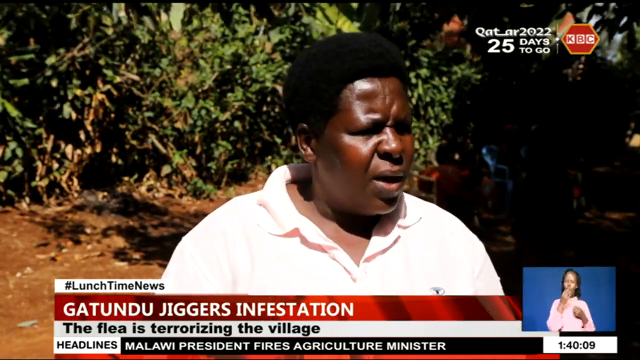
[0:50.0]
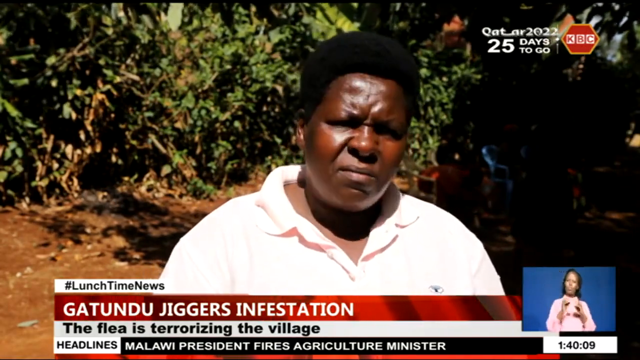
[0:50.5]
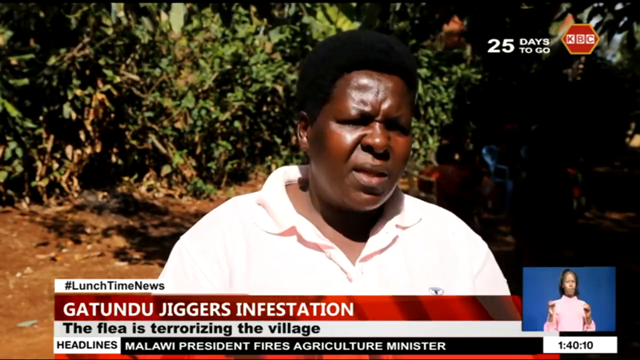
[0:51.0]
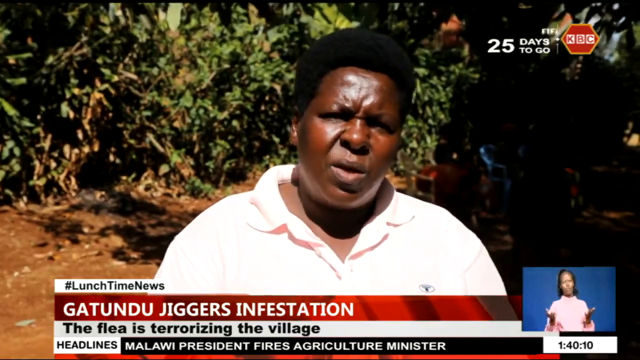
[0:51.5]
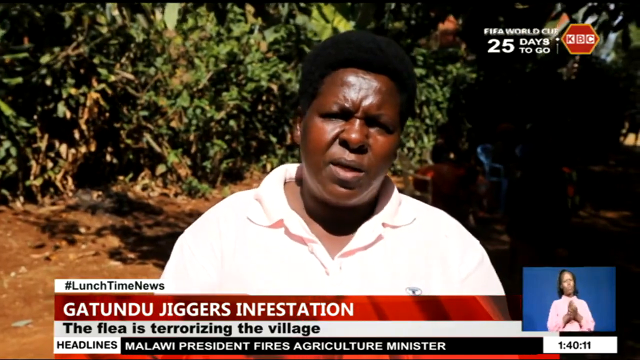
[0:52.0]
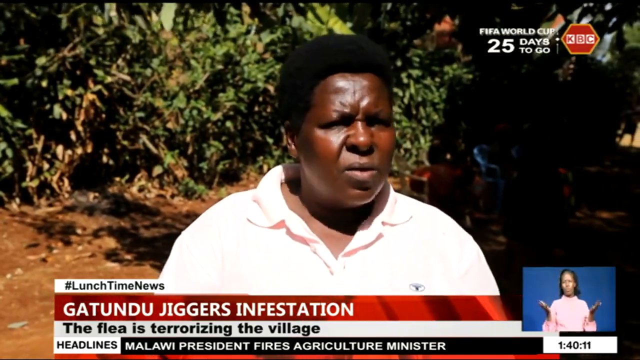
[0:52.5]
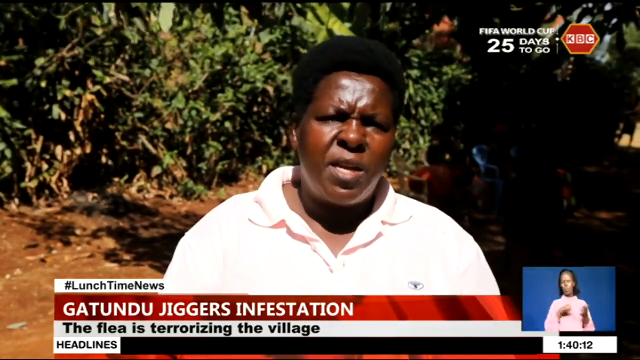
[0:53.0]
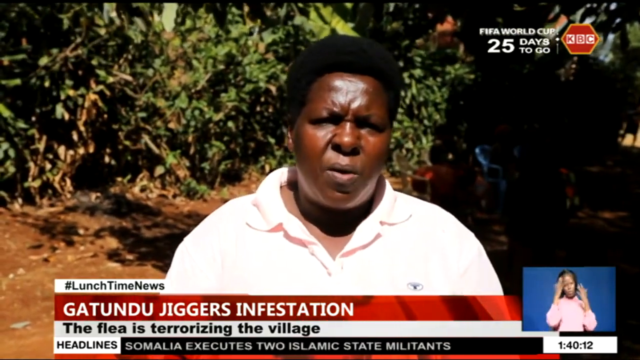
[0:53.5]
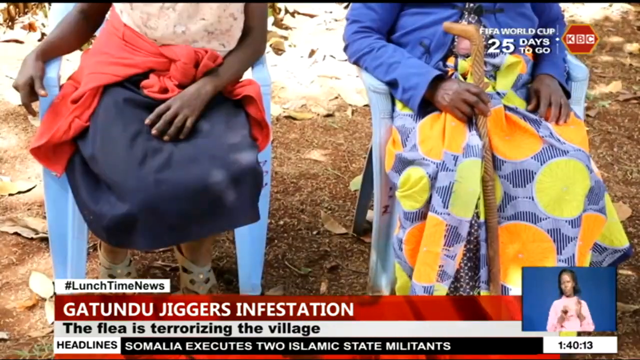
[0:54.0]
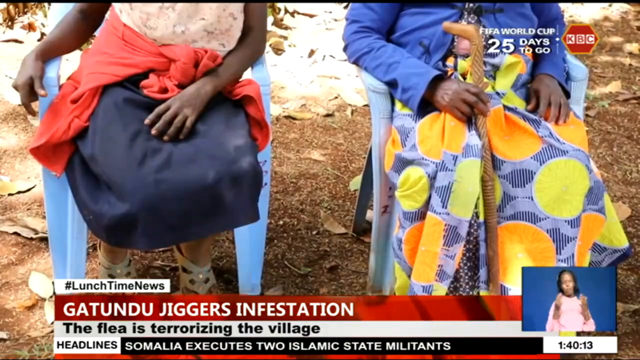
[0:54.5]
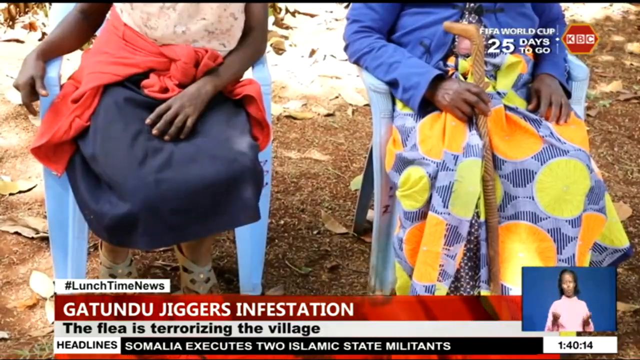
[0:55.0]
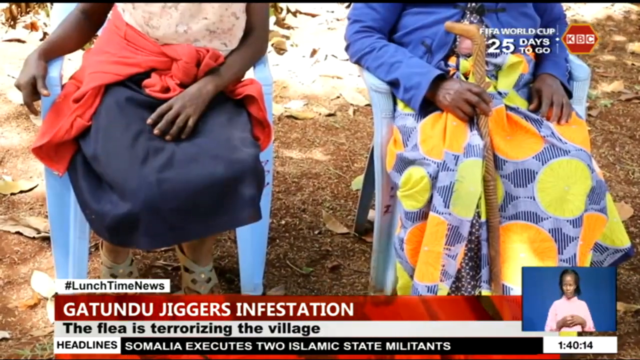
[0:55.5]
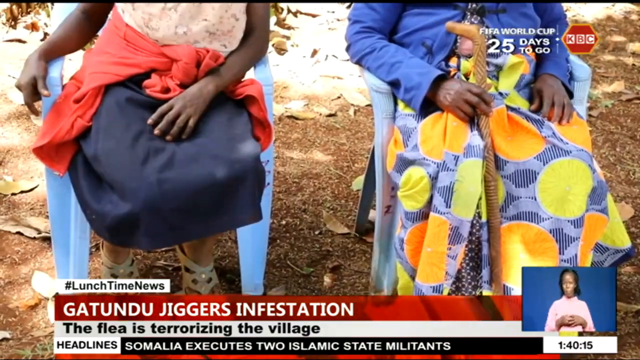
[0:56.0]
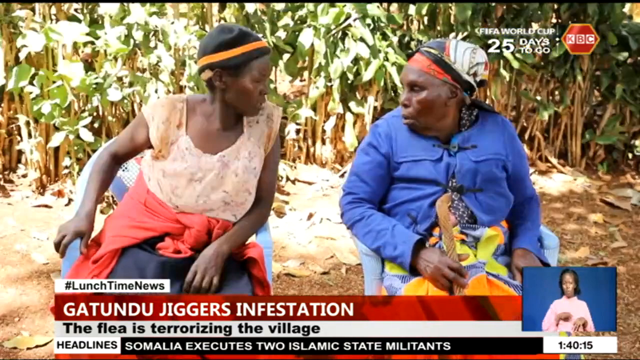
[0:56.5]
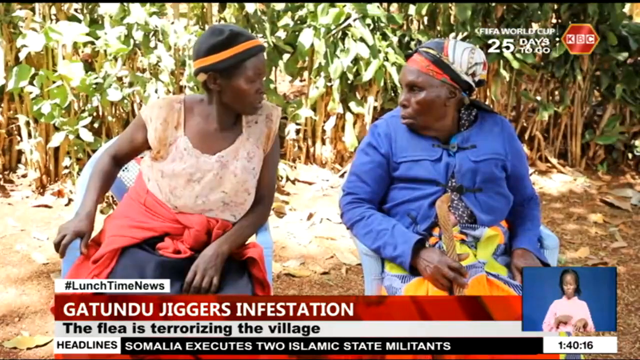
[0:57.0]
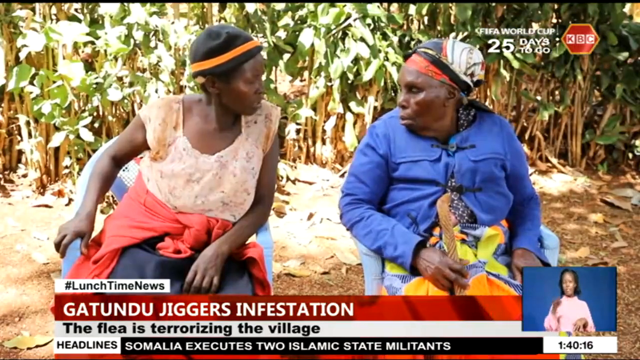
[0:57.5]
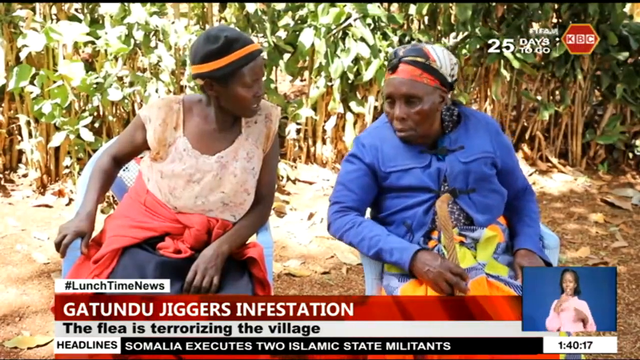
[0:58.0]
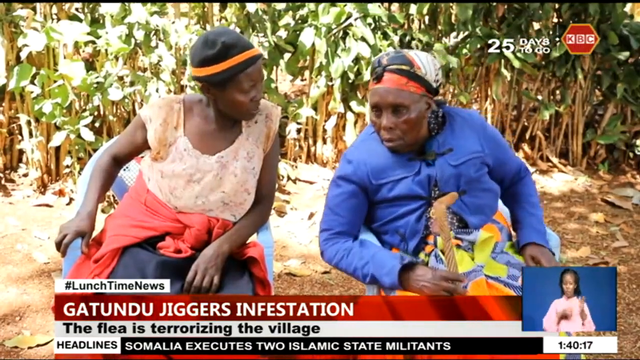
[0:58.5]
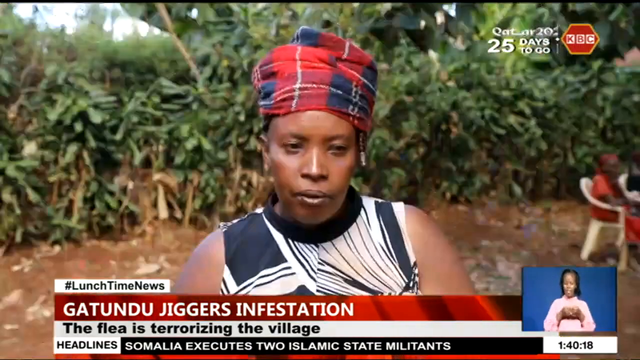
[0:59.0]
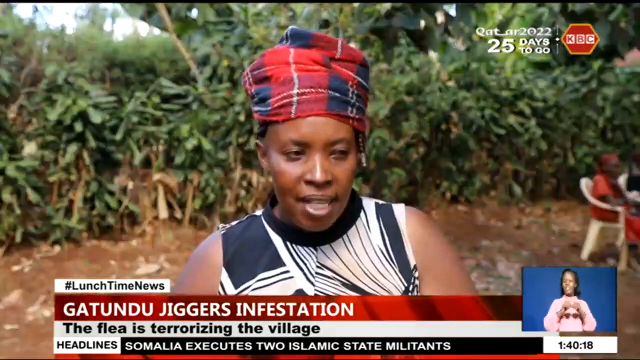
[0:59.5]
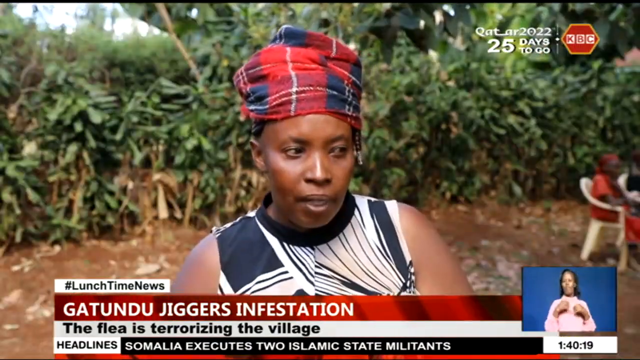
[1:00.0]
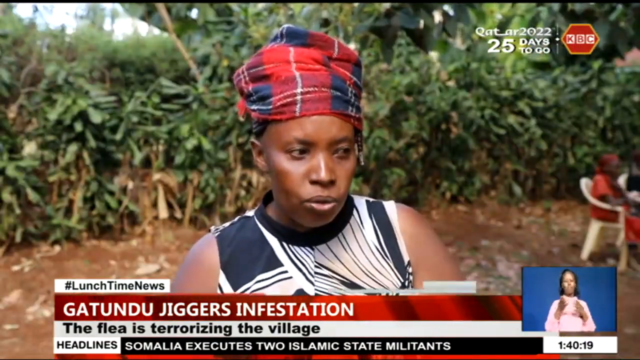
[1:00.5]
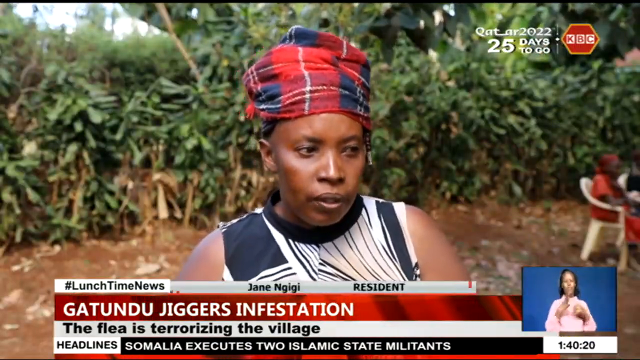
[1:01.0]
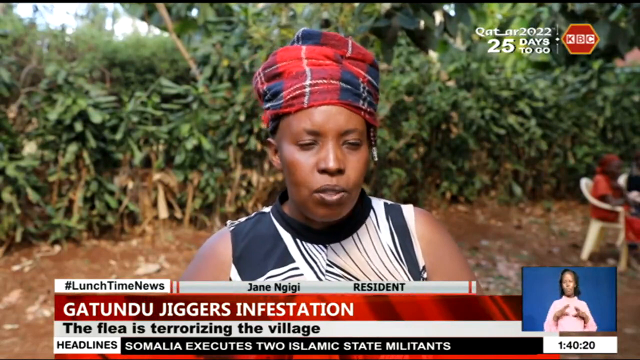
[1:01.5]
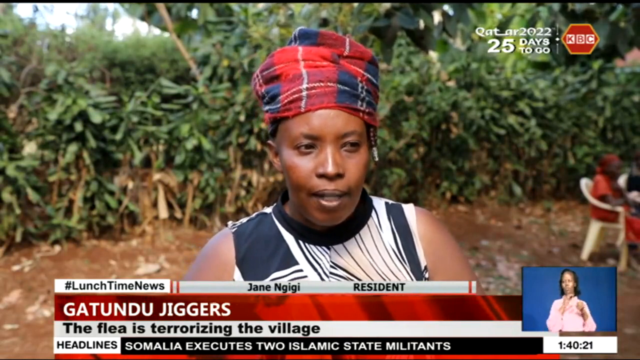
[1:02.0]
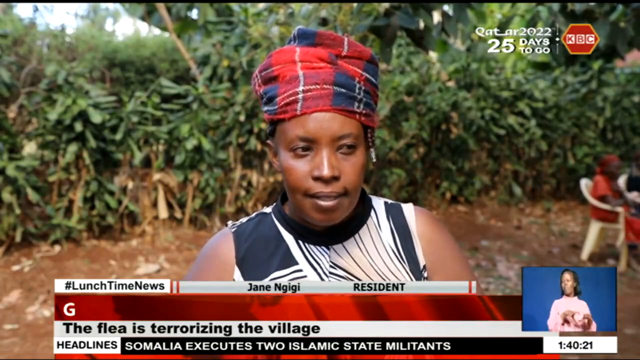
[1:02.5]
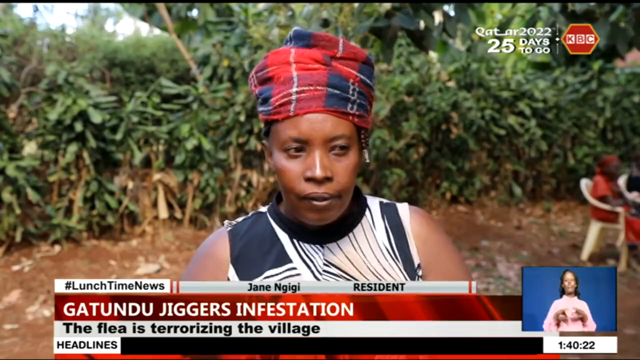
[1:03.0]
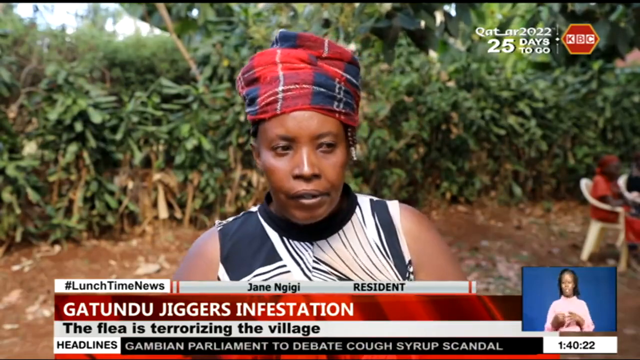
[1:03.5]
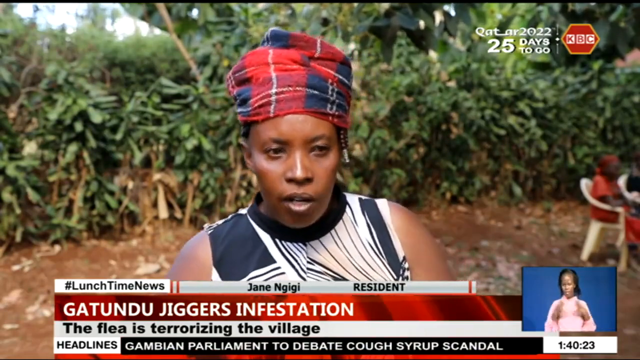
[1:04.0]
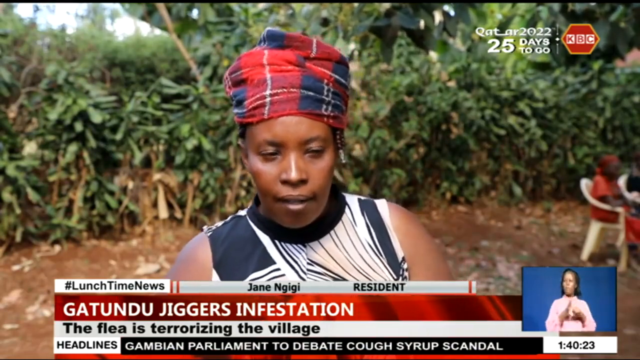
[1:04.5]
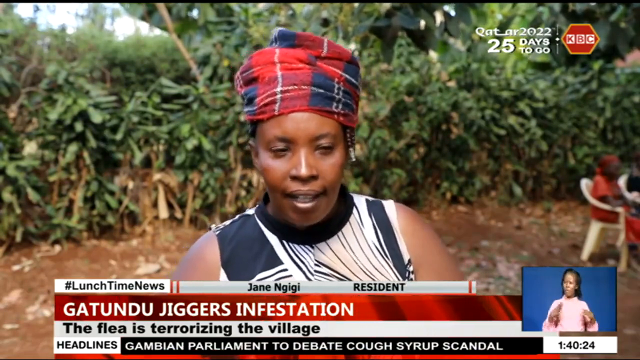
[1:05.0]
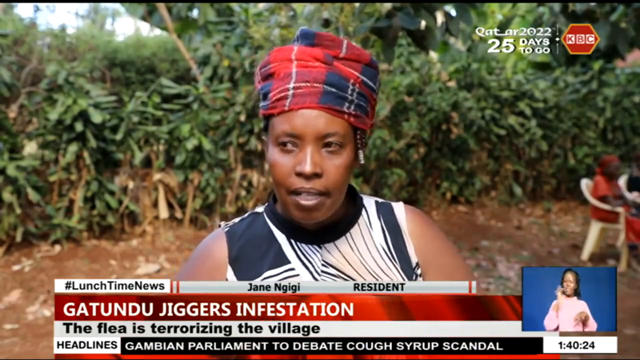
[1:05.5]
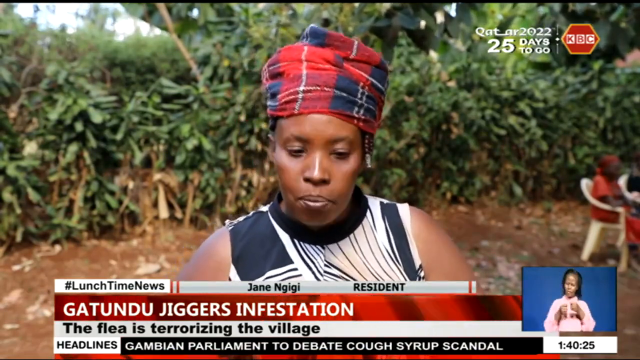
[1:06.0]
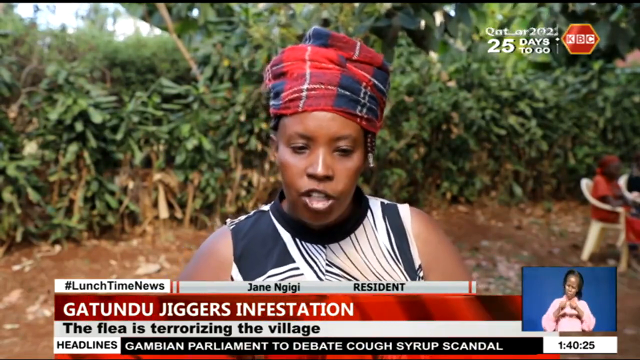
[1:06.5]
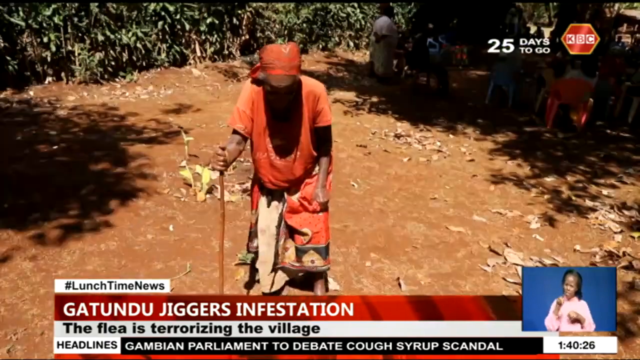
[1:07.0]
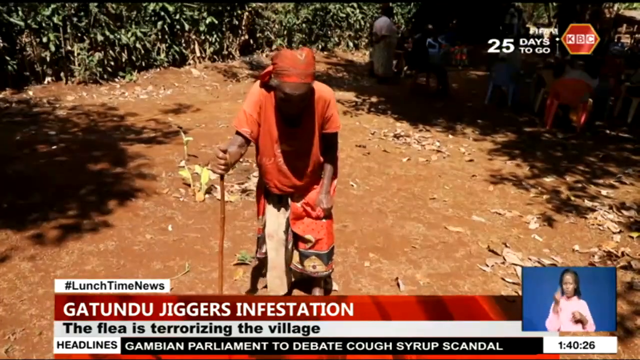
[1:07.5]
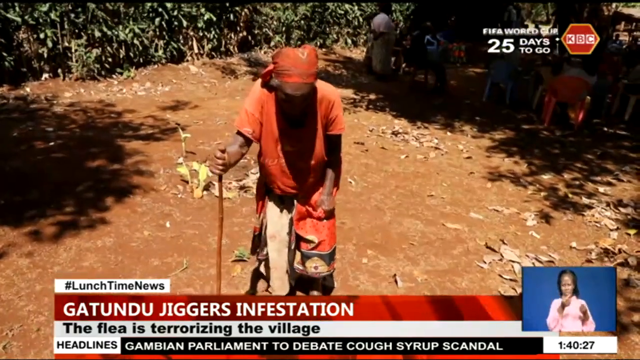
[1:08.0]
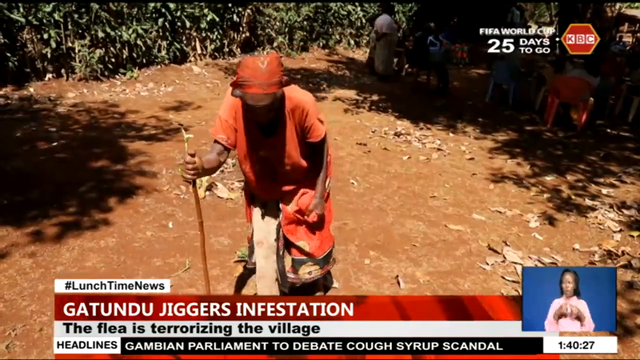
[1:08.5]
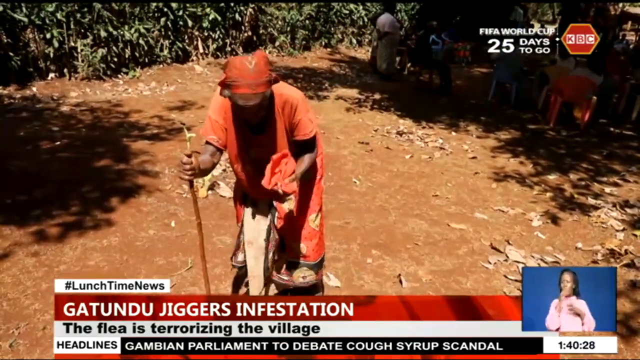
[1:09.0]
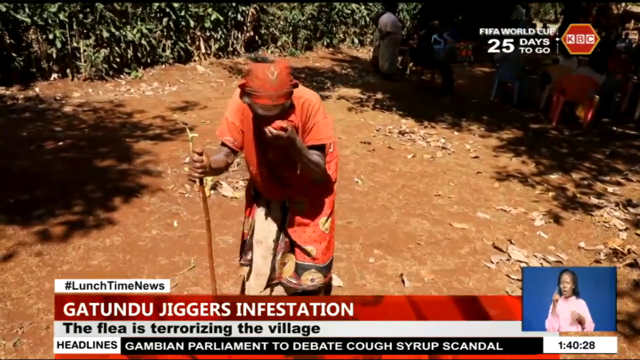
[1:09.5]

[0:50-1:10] The scene begins with a black, brown-skinned person with an afro and a pink shirt who is speaking, with the black, brown-skinned sign language interpreter in the bottom right of the frame. The person is outside, with dirt ground and trees visible. The shot cuts to two people, perhaps women, sitting on blue chairs on the dirt surface. They are black and brown-skinned and wearing colorful skirts. One has something tied around their waist, an orange shirt or sweater. The woman on the right is holding a brown cane. At the bottom is "Jatanta Jiggers Infestation. The flea is terrorizing the village," with "#lunchtime news" above it. In the top right is "FIFA World Cup 25 days to go," and "KBC" is written in a red shape to the right. The shot then cuts to the two women: the one on the left leans in to speak to the woman on the right, who is also leaning in. Next is a black, brown-skinned woman with a red, white and blue scarf tied around her head, wearing a black and white sleeveless top. To her right, a woman is sitting in a white lawn chair on the dirt surface. At the bottom is "Jane Najiji Resident." The shot then cuts to a woman walking on the dirt surface with a cane. She is bent over and wearing an orange head tie and an orange dress. People in the back appear to be sitting. The woman begins to wipe her brow with an orange towel.